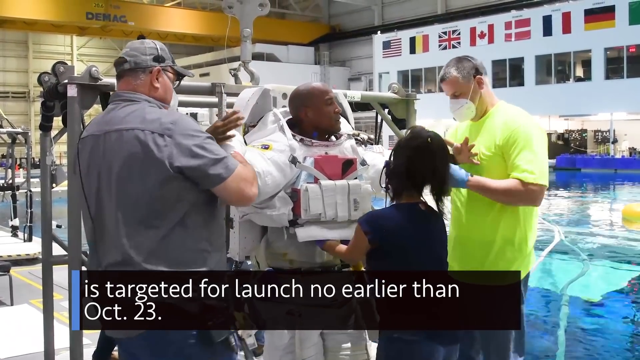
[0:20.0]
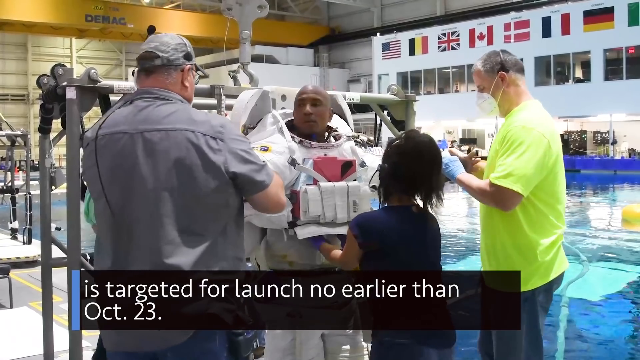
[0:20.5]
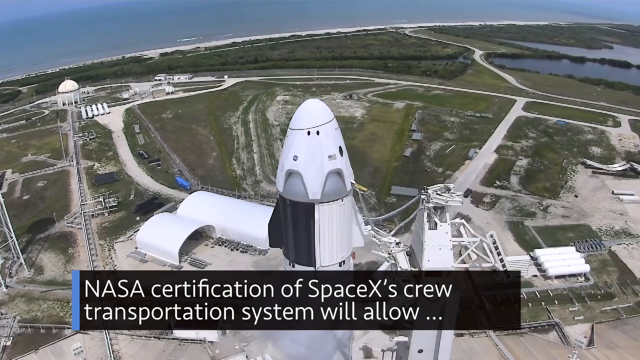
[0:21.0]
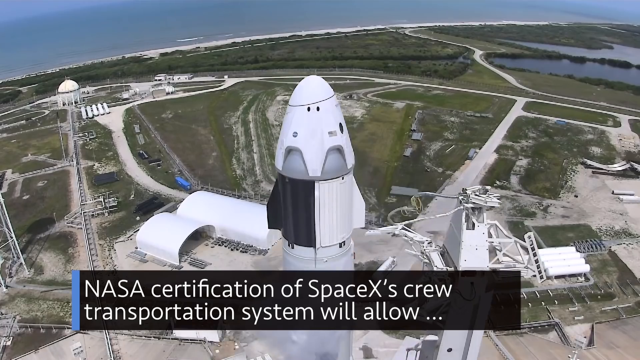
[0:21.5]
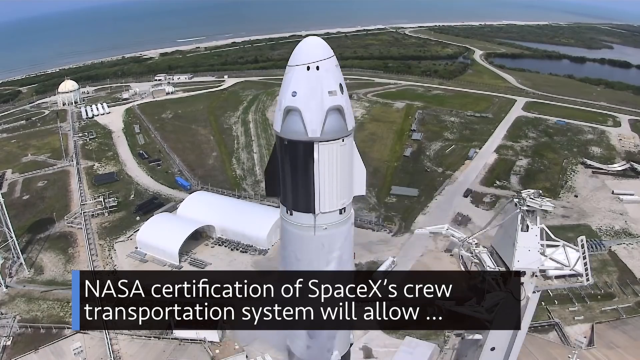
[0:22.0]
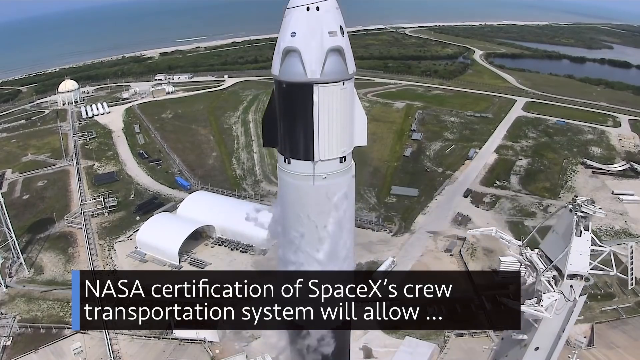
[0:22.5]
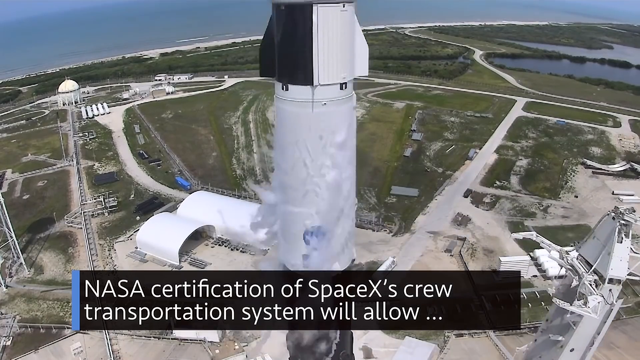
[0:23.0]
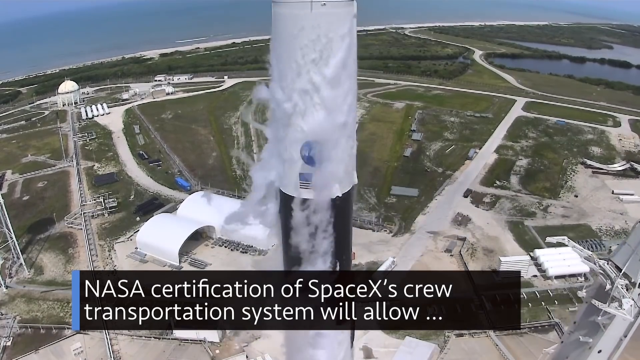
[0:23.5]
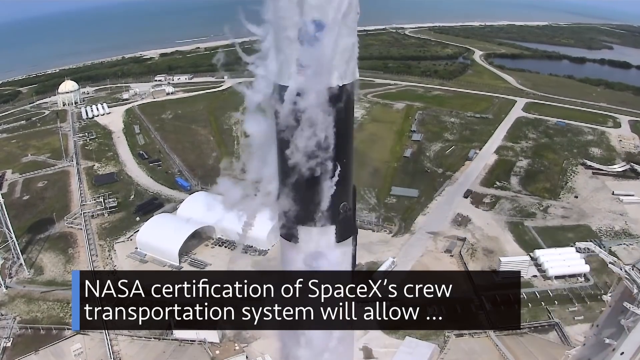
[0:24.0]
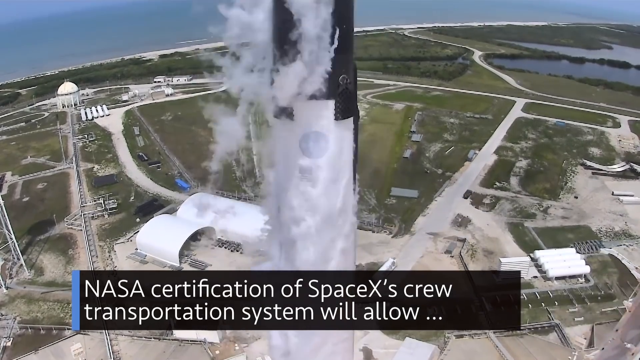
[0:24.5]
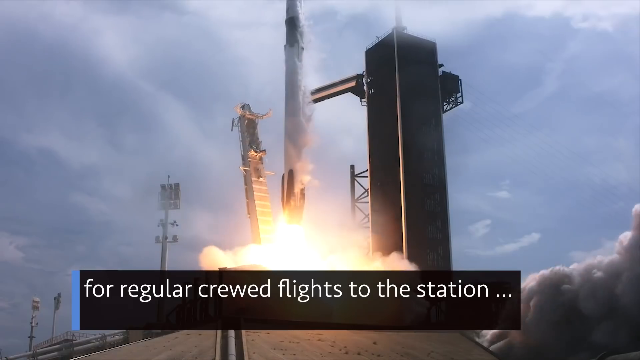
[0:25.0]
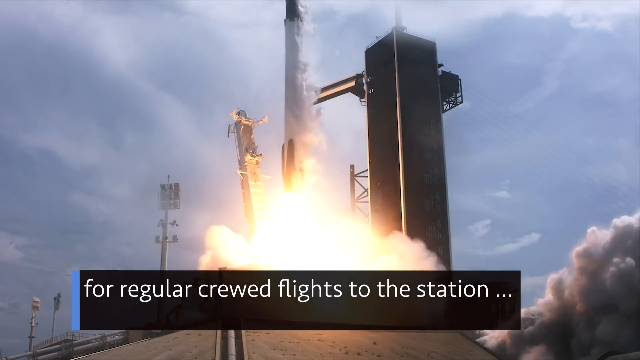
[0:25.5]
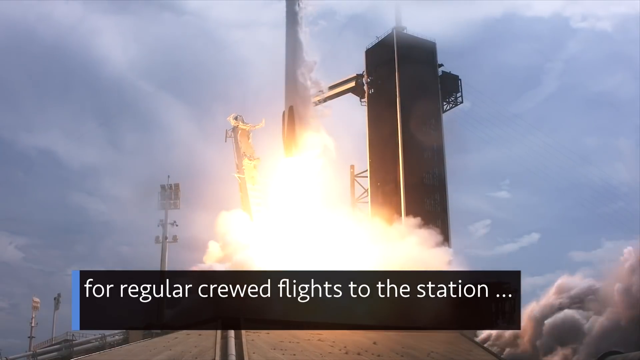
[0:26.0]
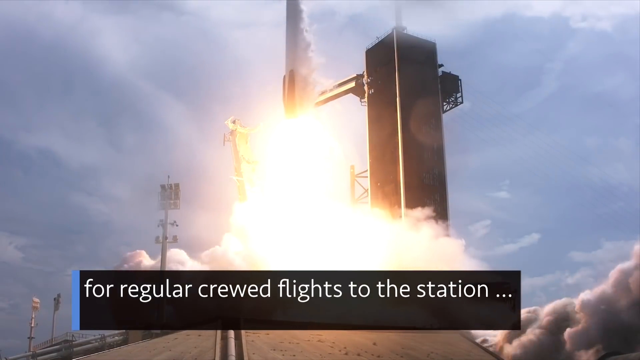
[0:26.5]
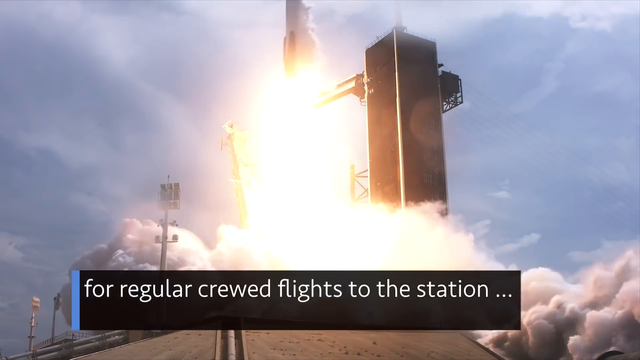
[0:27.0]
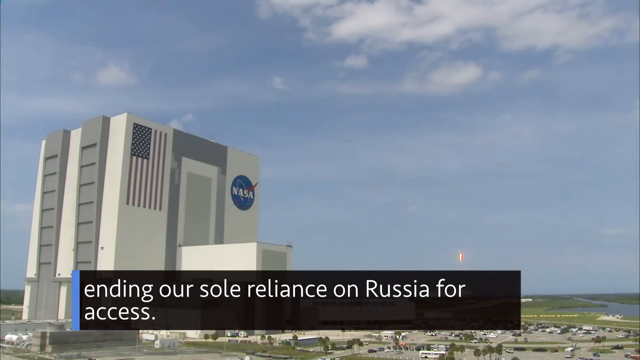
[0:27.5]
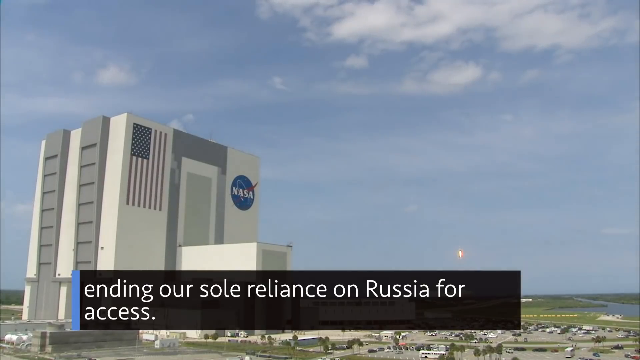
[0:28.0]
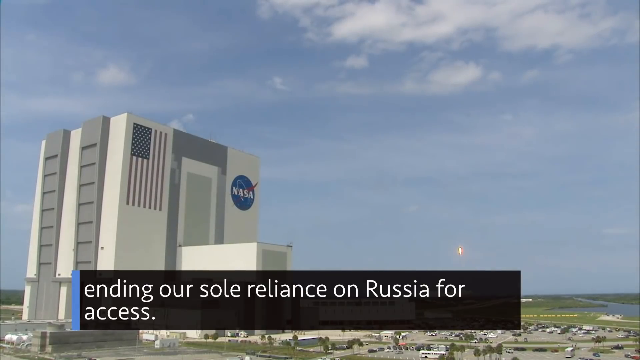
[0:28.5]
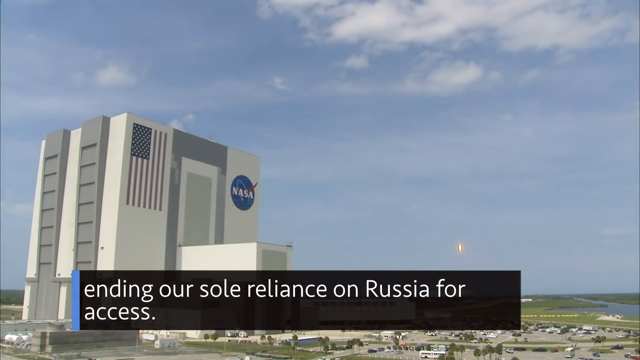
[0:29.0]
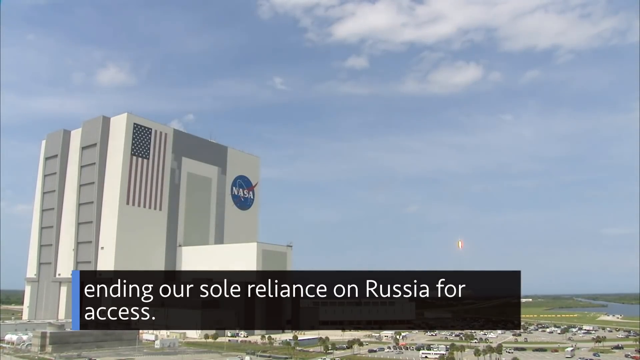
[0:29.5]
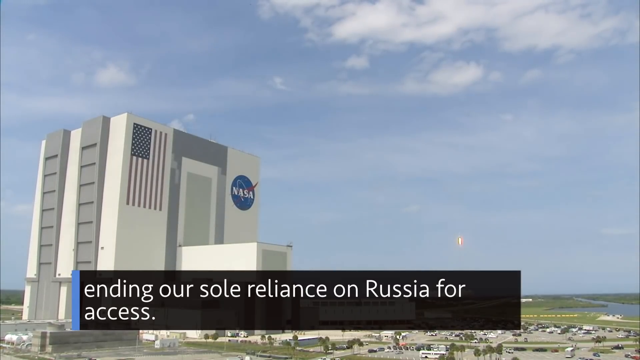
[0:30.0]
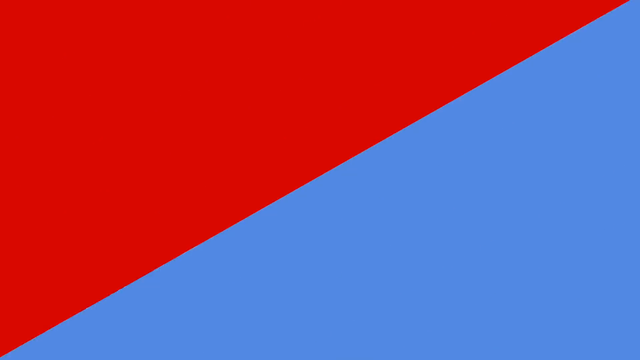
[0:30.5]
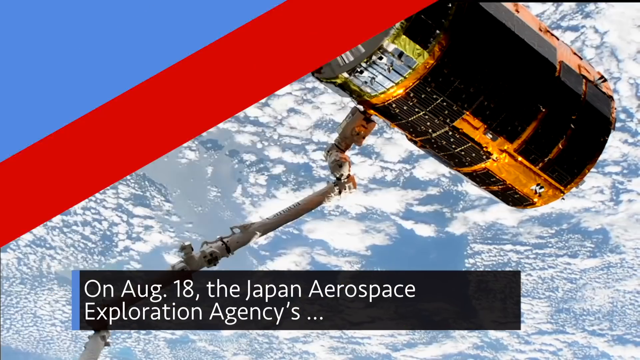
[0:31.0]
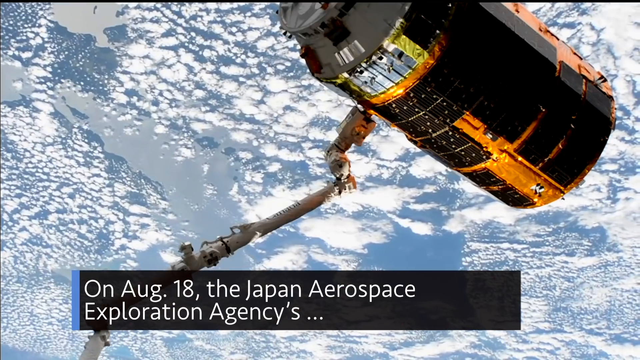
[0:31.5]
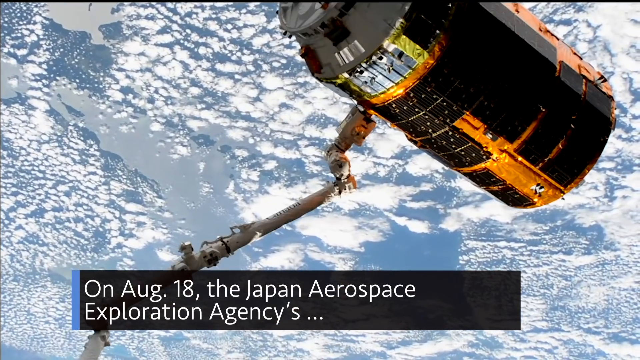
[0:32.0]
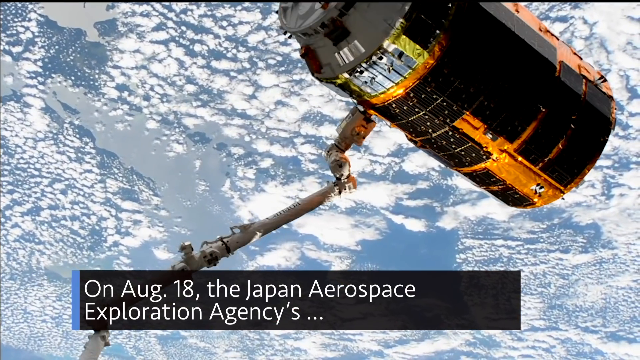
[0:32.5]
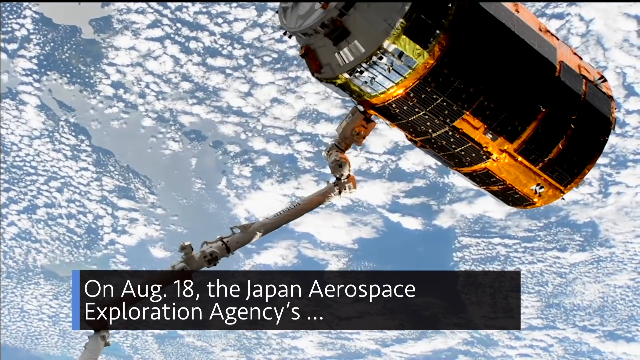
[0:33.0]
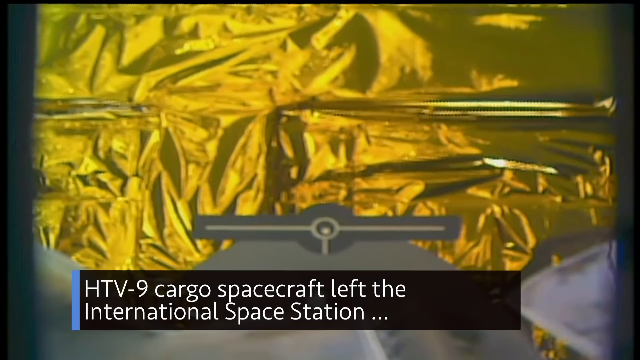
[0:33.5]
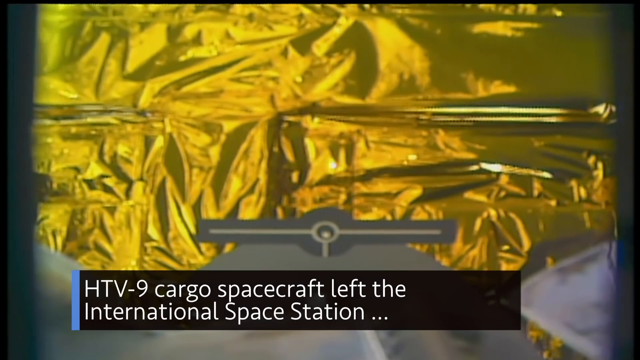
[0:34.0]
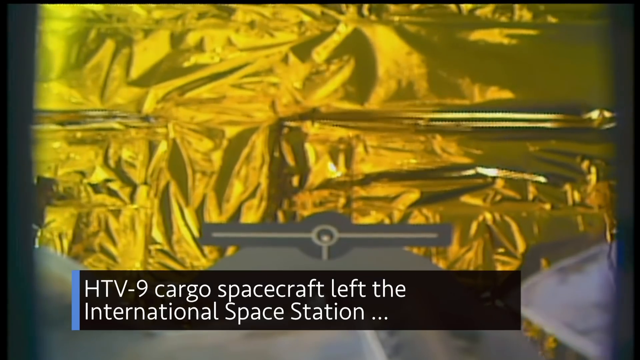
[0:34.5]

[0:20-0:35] Briefly, the African-American astronaut is placed into the white suit, with three people around him, two men and one woman, securing the suit and making sure everything fits properly. The scene changes to a bird's-eye view of the launch, with text at the bottom reading "NASA certification of SpaceX crew transportation system will allow." Next is a bottom view of the rocket launching, with the banner "for regular crewed flights to the station." Then the view shows the NASA building where the launch is occurring, with blue skies, a tiny rocket launching in the very back, and a lot of grass in the foreground; the banner reads "ending our sole reliance on Russia for access." A red and blue transition leads to the US space station in space, with the text "on August 18th the Japan Aerospace Exploration Agency's HTV-9 cargo spacecraft left the International Space Station." The scene then changes to what looks like gold foil with a little crosshair in the center of the screen.